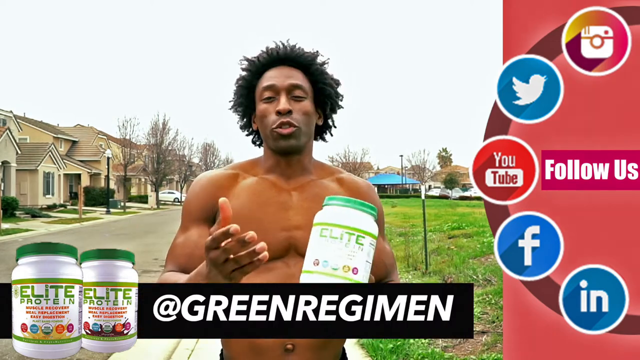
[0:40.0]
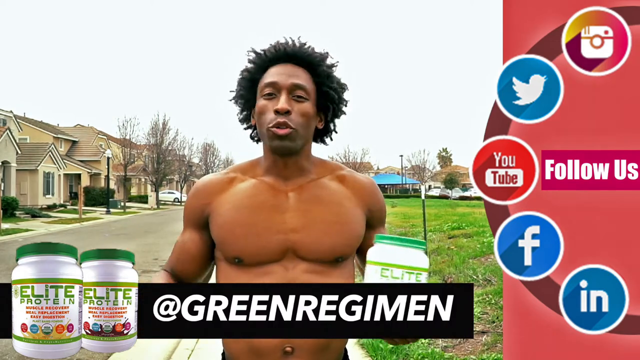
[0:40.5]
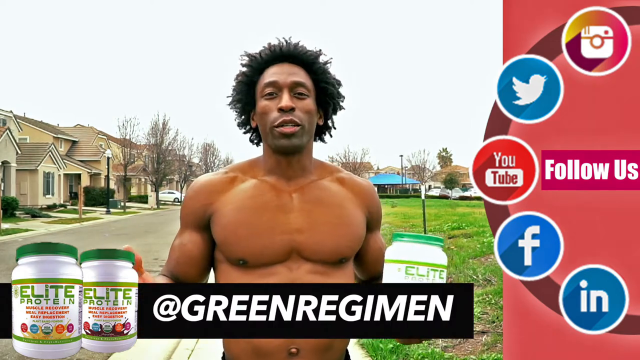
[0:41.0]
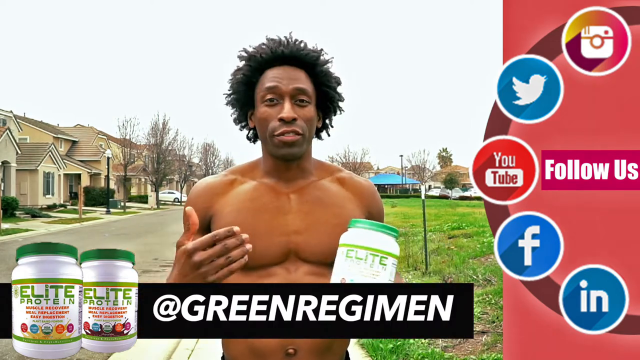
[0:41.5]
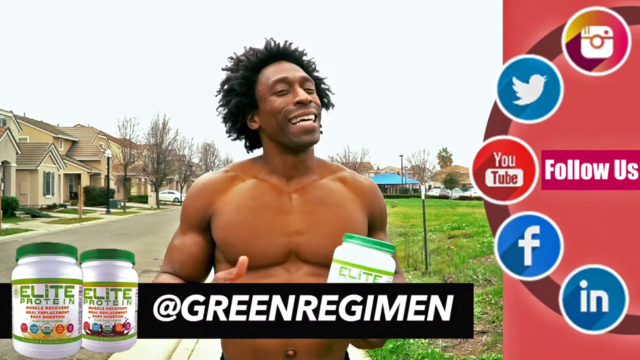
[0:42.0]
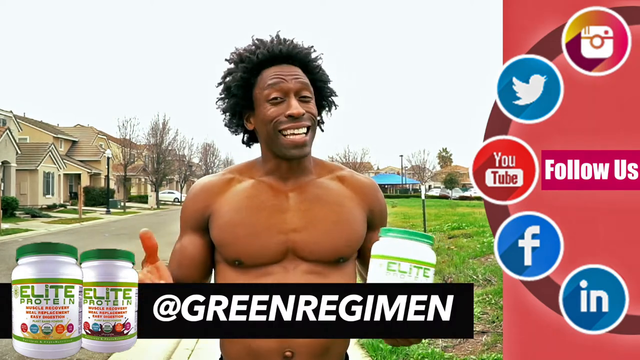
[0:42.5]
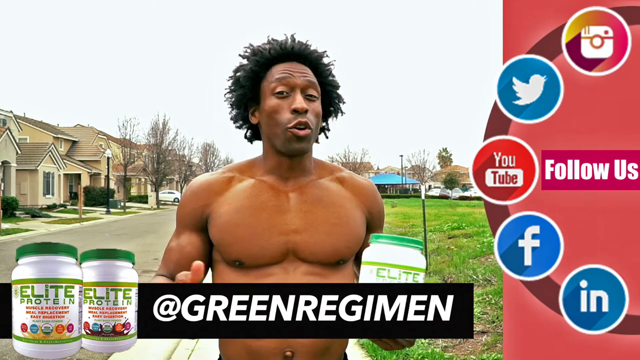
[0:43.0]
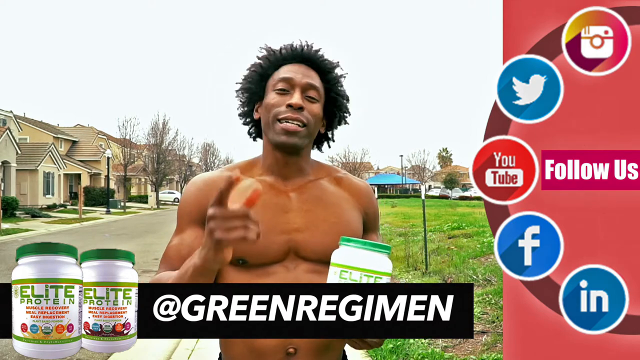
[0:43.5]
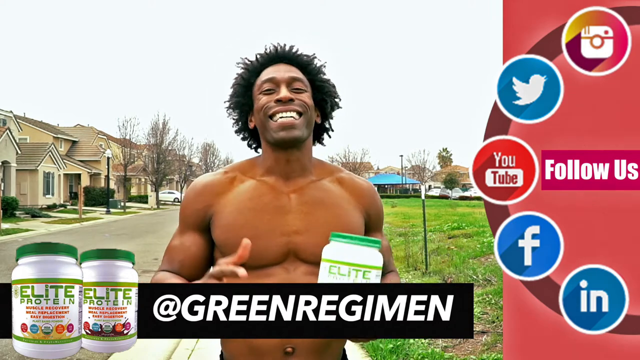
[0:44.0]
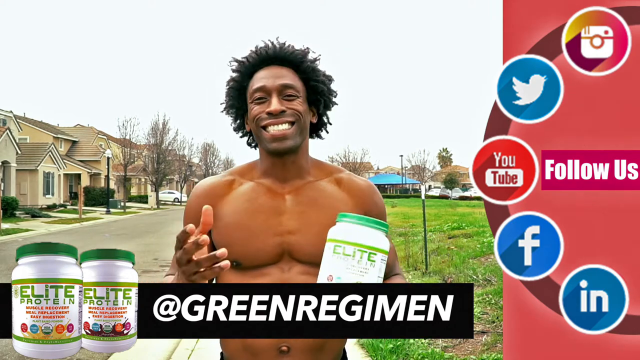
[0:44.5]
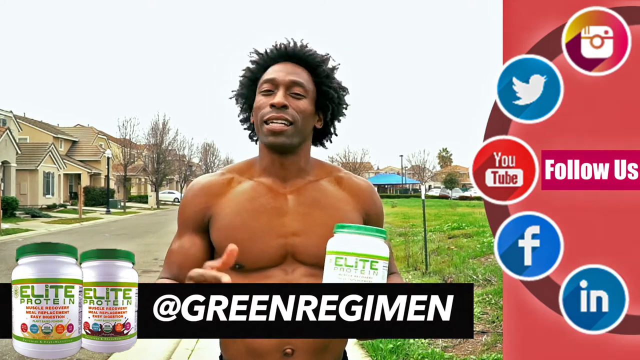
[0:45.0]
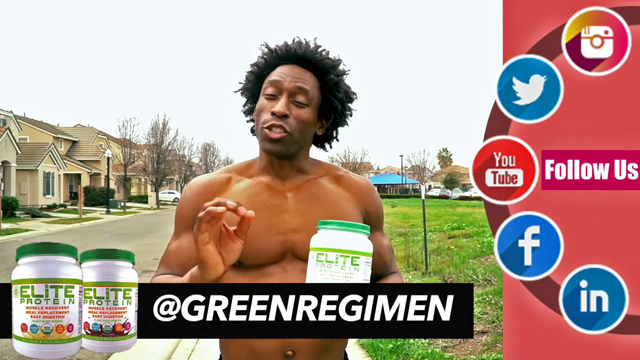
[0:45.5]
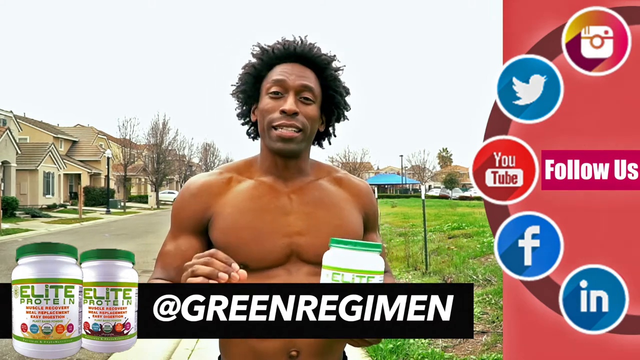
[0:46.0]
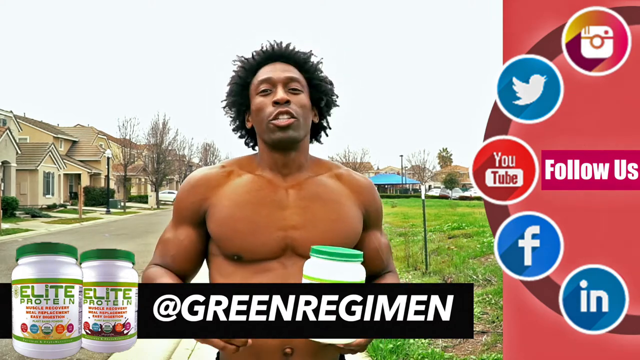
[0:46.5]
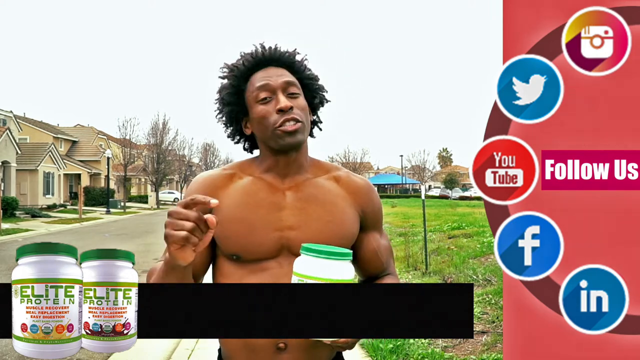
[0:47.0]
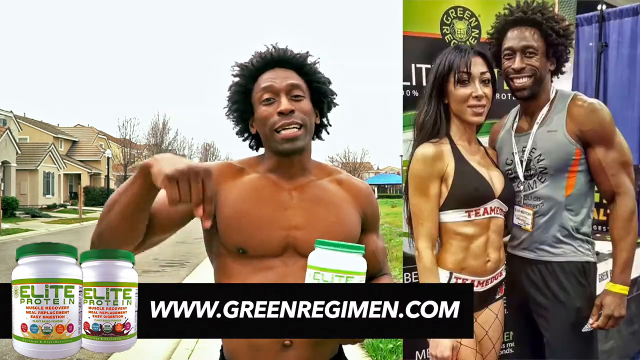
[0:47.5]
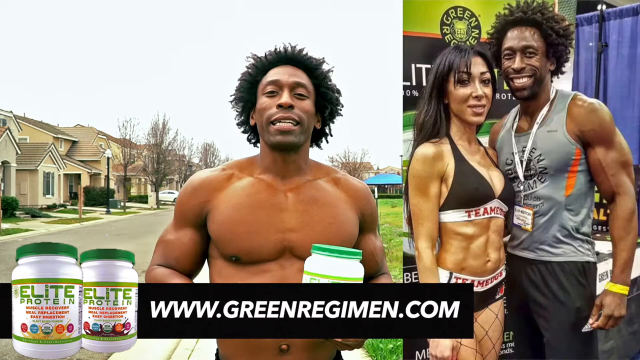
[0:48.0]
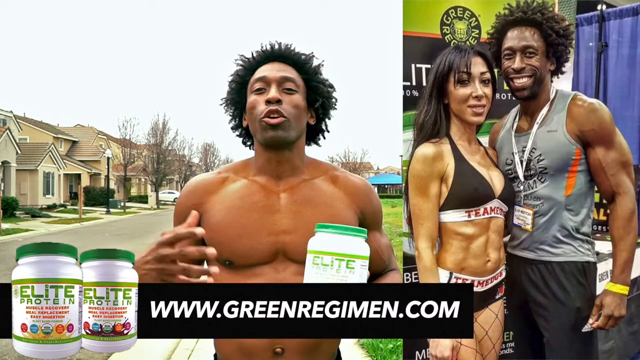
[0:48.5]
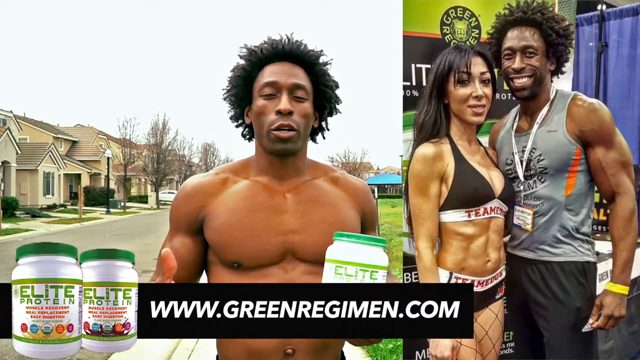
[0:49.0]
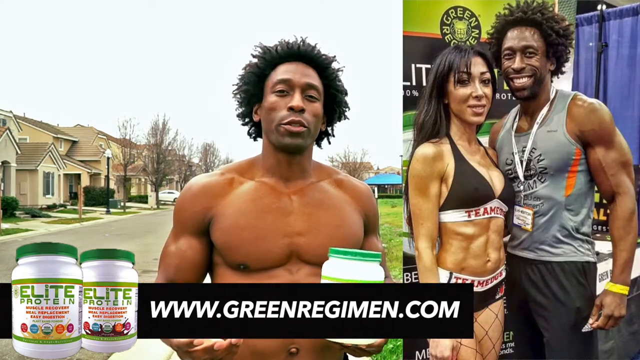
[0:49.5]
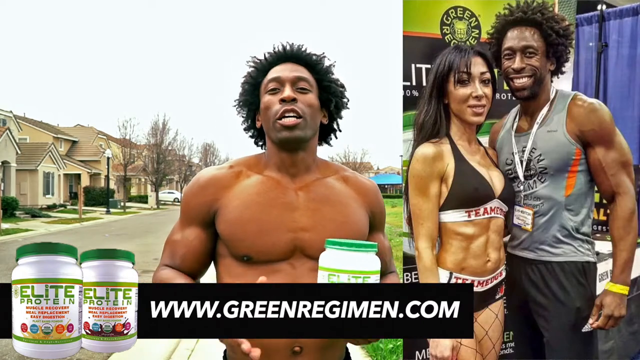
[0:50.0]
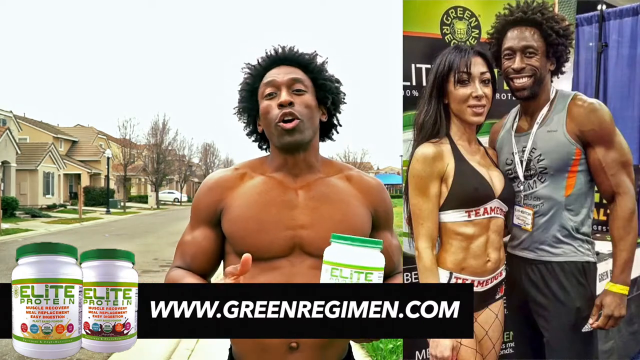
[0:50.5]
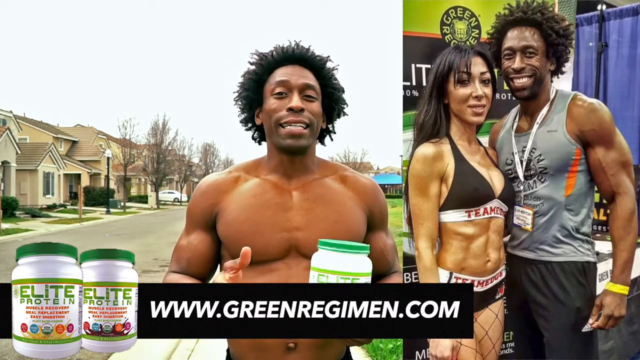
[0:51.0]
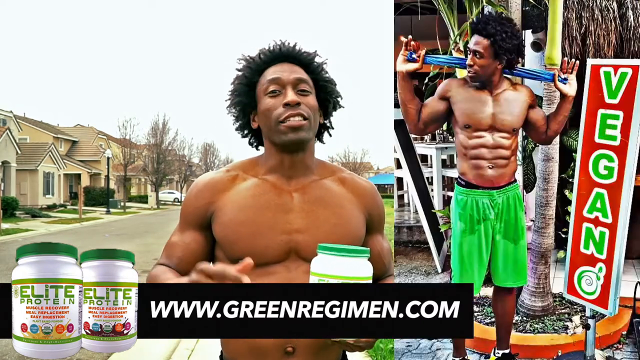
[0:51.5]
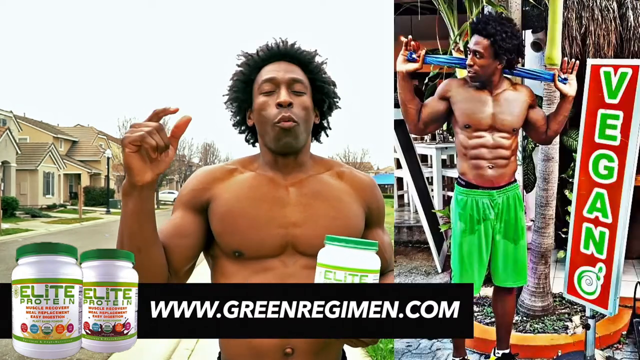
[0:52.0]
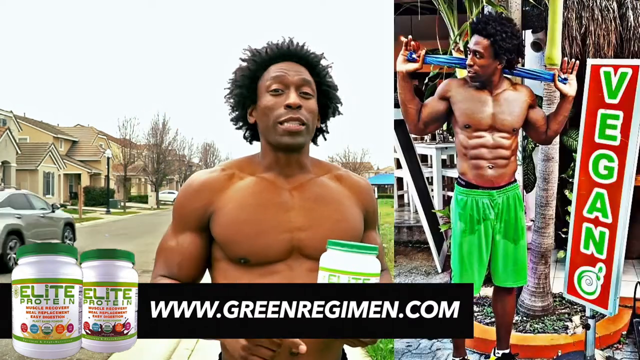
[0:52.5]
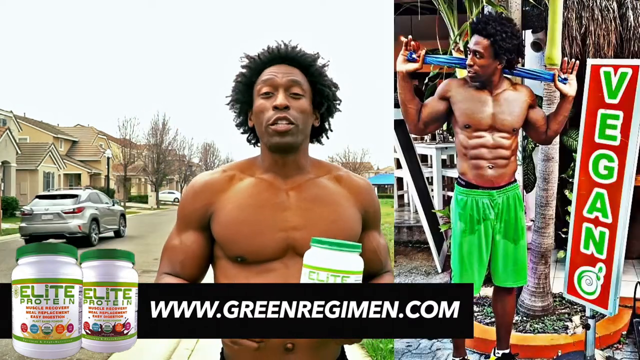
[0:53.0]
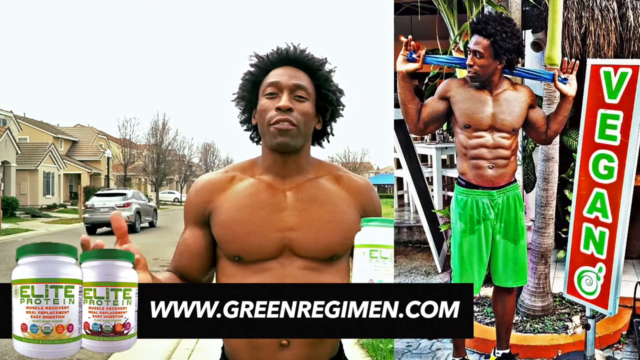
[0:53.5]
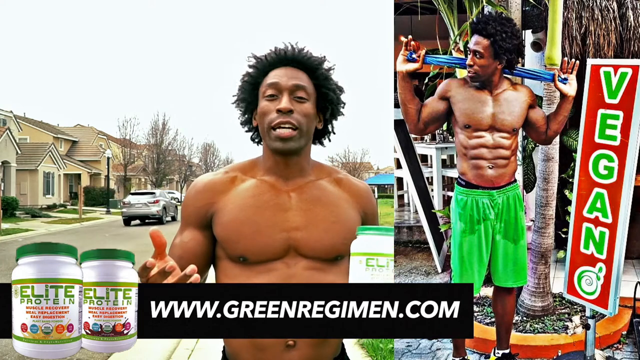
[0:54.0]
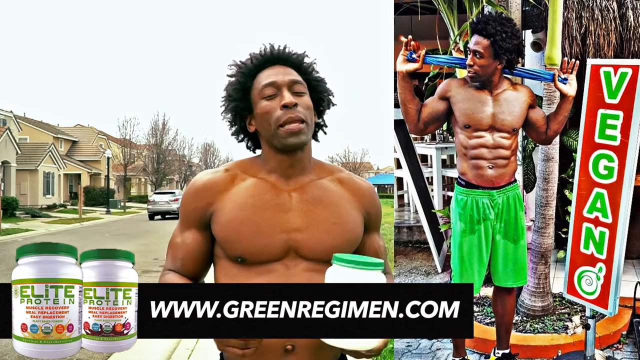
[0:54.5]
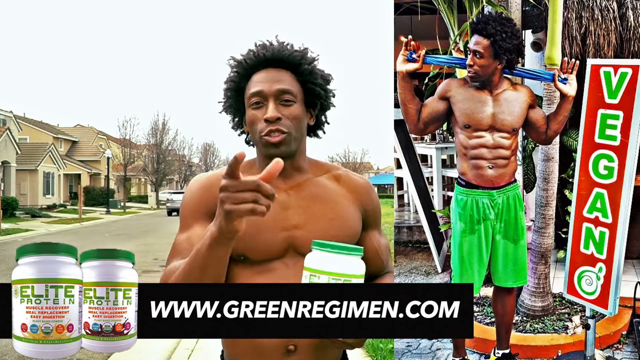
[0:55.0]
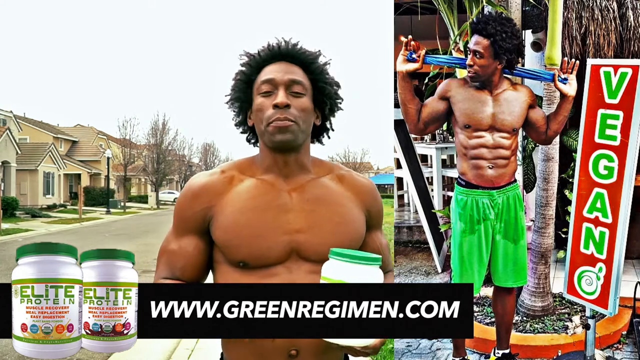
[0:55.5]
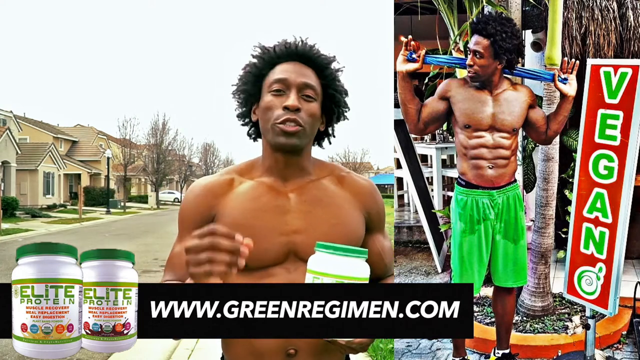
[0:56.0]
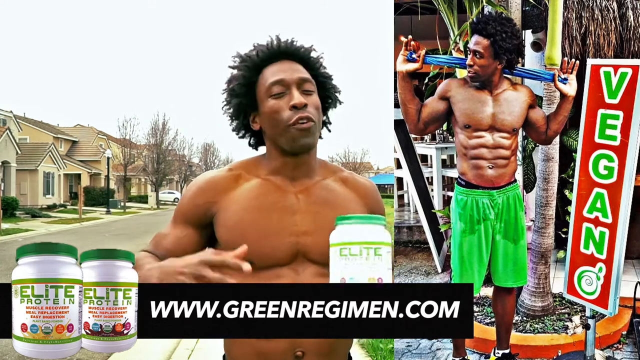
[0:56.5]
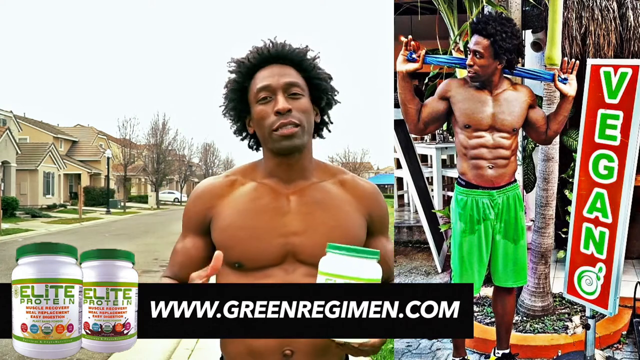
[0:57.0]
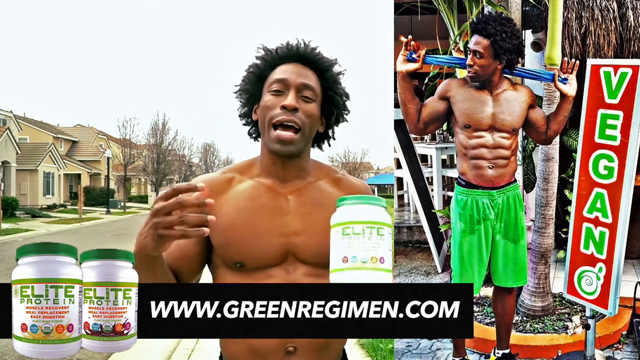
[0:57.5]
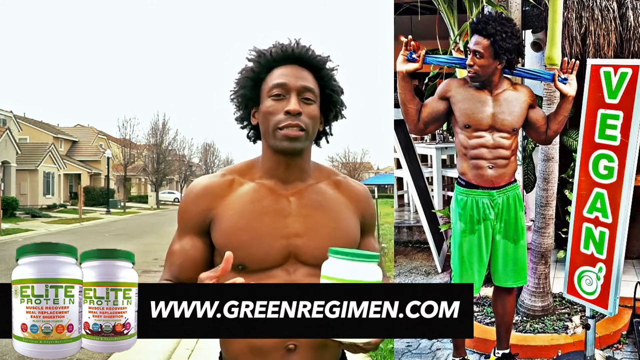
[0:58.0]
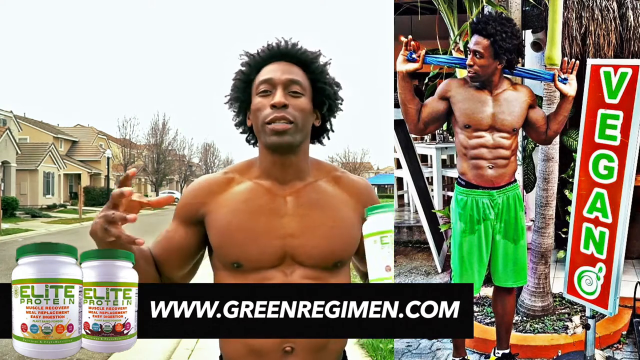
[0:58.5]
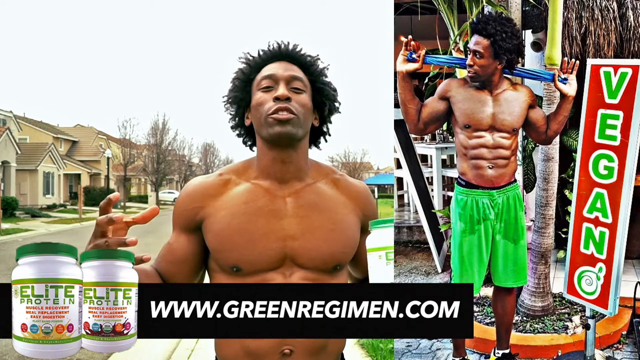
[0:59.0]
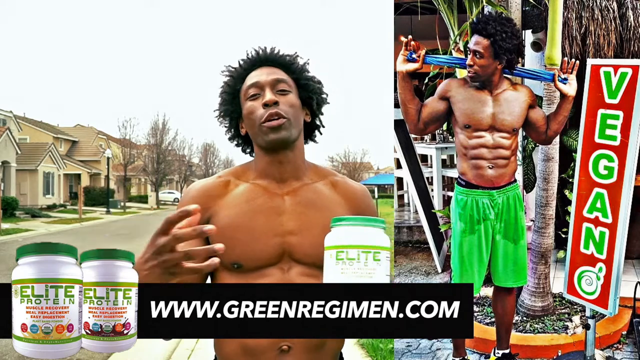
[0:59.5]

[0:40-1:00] The man continues to emphatically promote the benefits of the protein powder to the camera while a banner on the right-hand side shows ways to contact or follow the company through their socials: Instagram, Twitter, YouTube, Facebook and LinkedIn logos, along with the website address www.greenregiment.com. A slider then comes in from the right showing the same man with a very fit woman who is lighter in skin tone. She wears a black top with a white band underneath and matching black bottoms with a white band just below her navel, and she has very well-defined ab muscles. They appear to be at a trade show type of event, standing in front of tables with a backdrop of their company logo. Both have big smiles. The man wears a gray tank top with his company logo on it and has an event badge hanging around his neck on a lanyard.